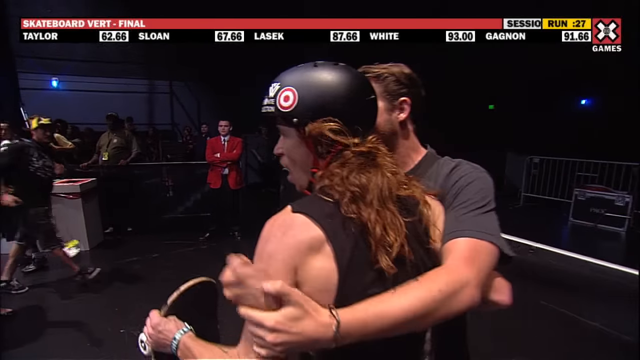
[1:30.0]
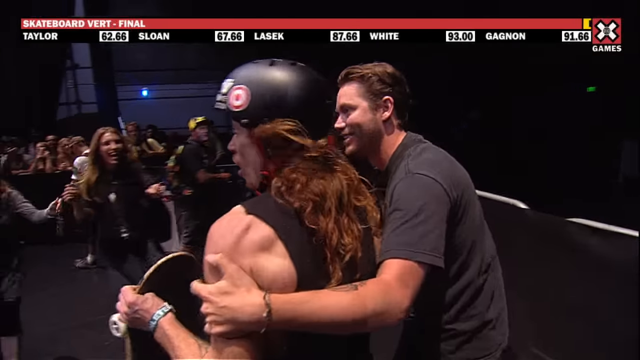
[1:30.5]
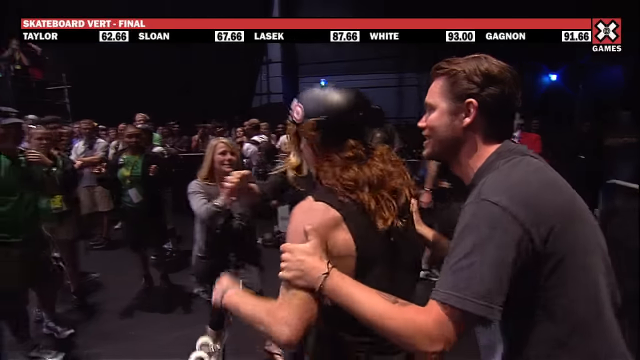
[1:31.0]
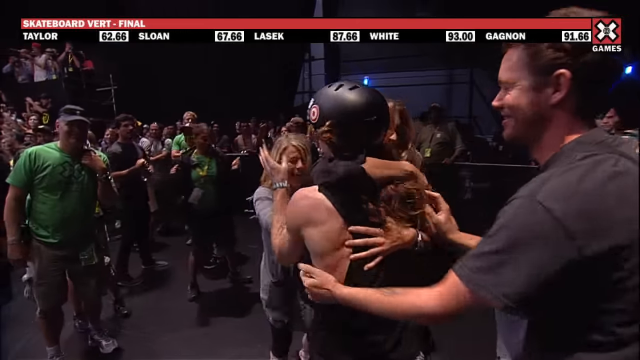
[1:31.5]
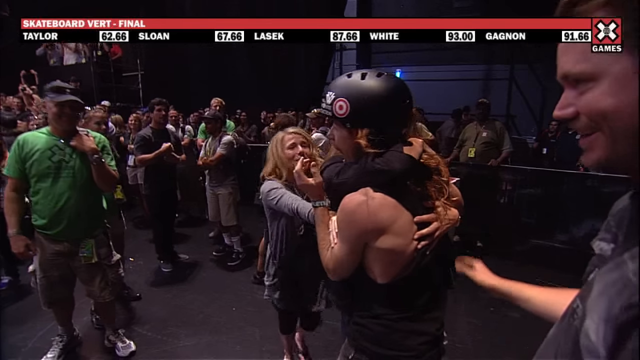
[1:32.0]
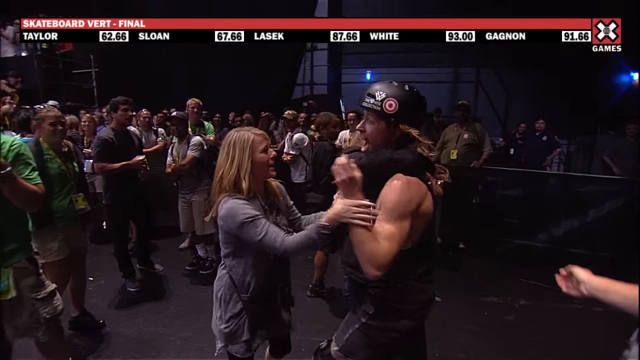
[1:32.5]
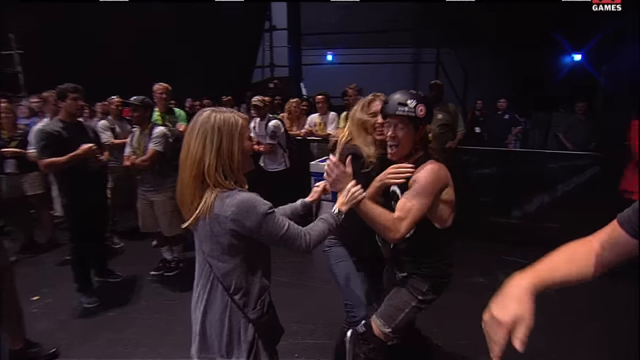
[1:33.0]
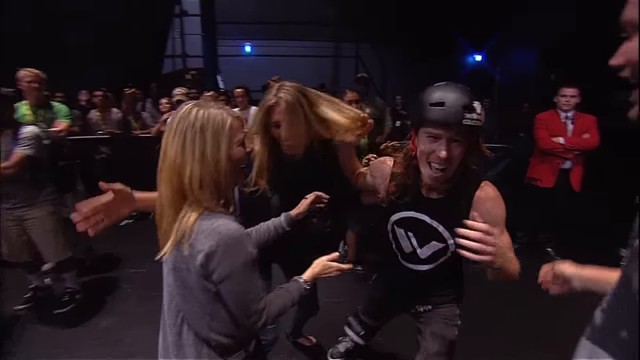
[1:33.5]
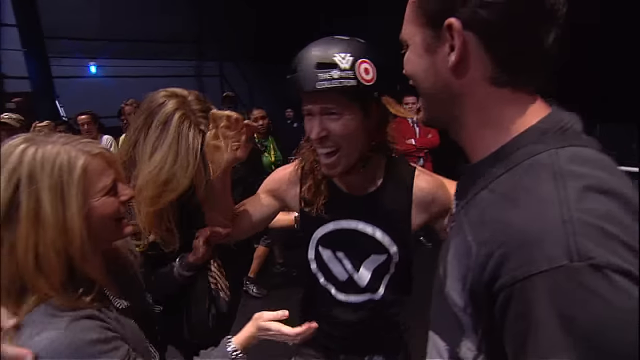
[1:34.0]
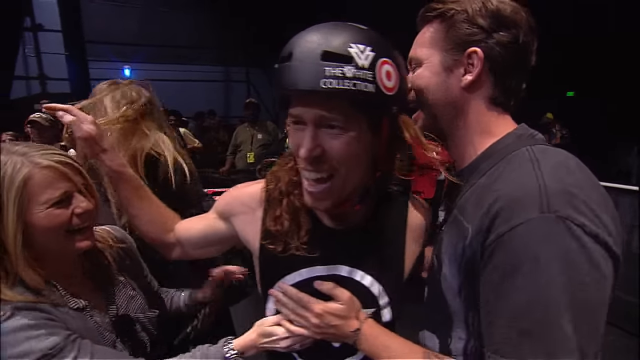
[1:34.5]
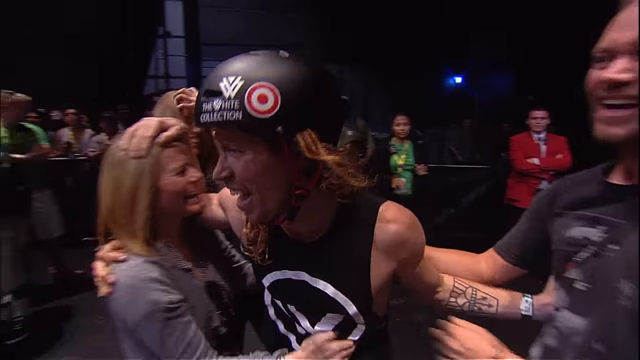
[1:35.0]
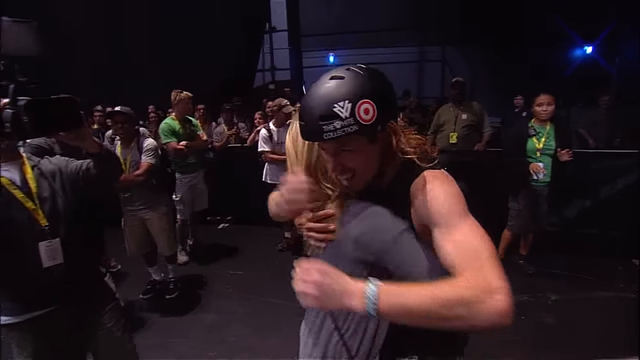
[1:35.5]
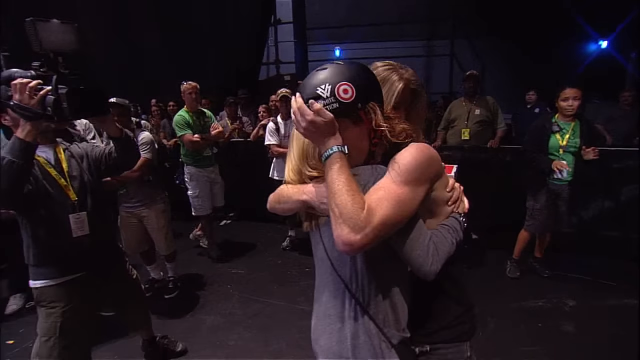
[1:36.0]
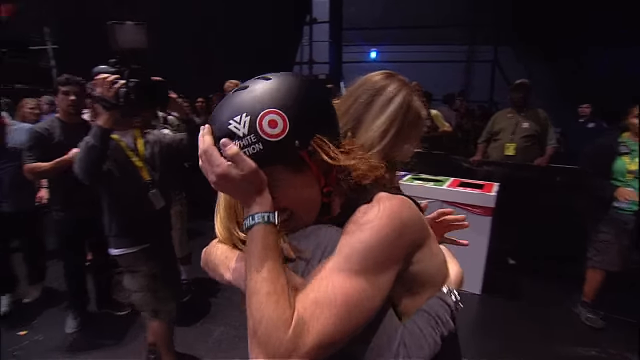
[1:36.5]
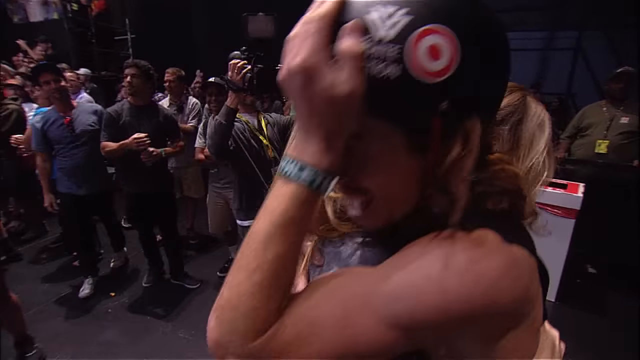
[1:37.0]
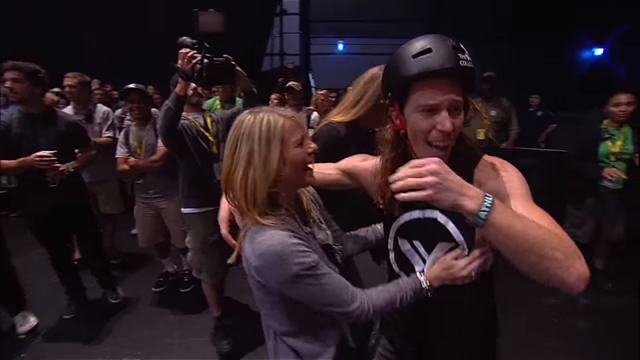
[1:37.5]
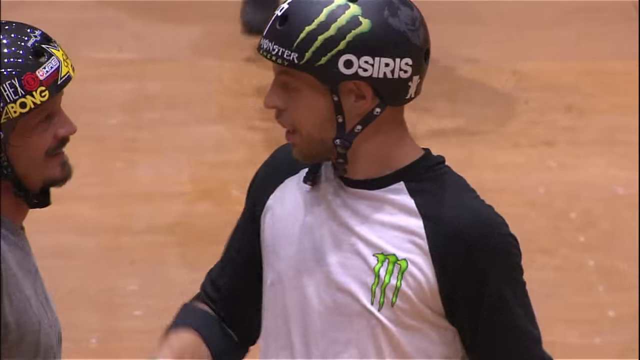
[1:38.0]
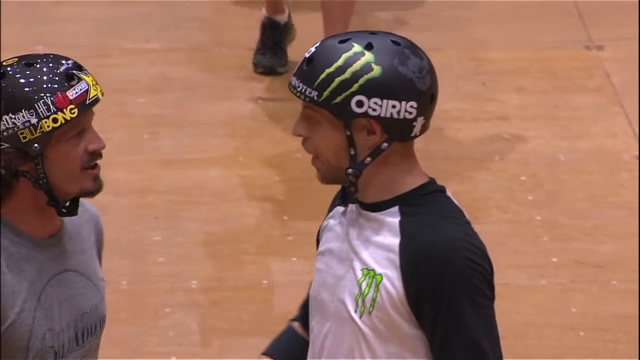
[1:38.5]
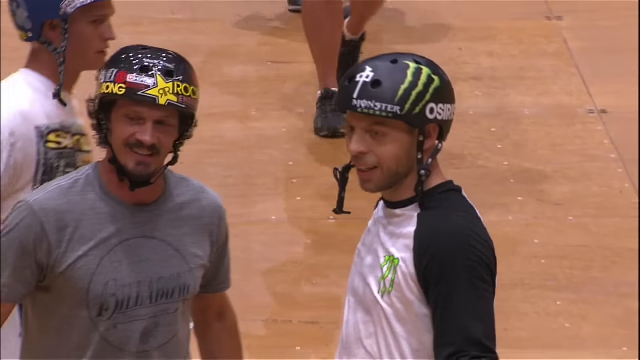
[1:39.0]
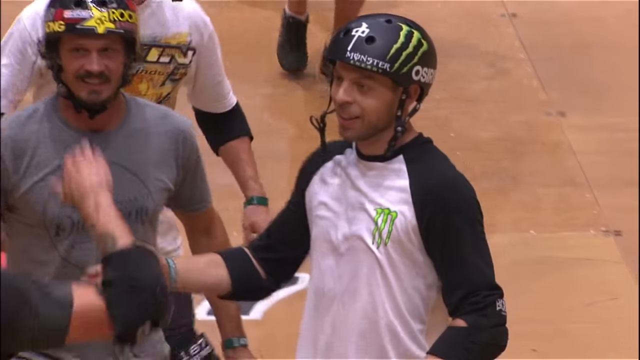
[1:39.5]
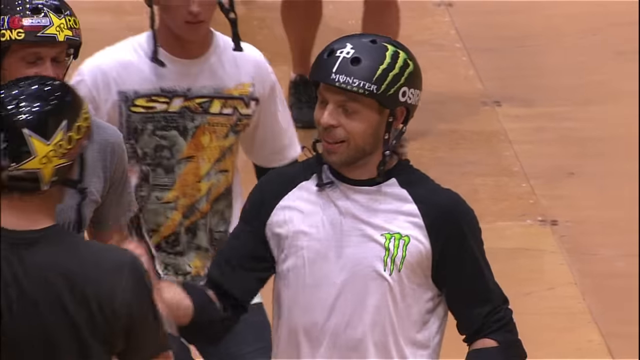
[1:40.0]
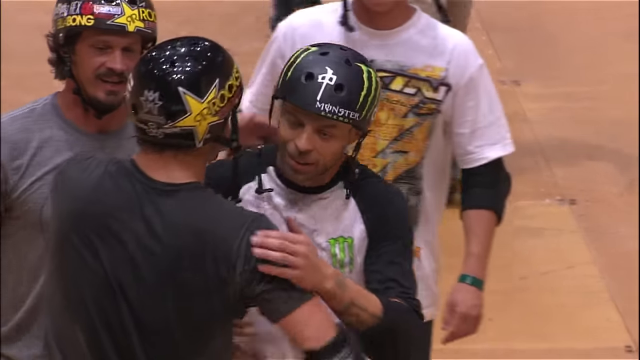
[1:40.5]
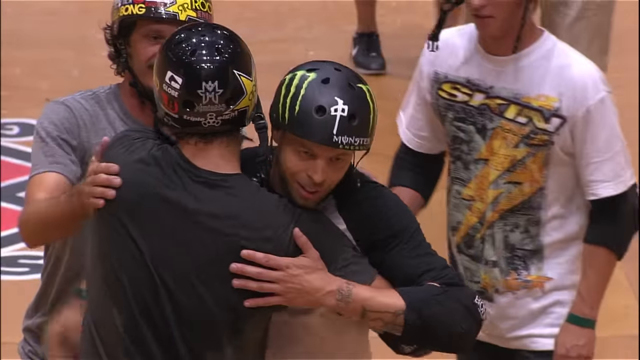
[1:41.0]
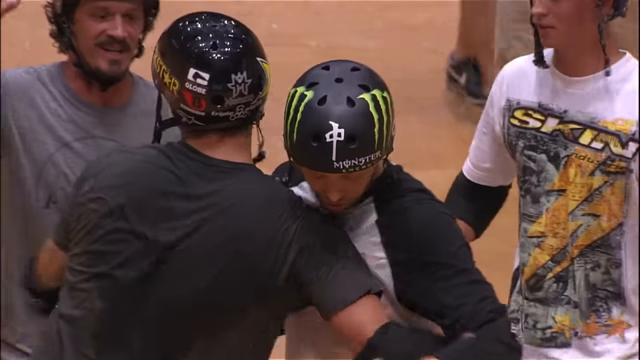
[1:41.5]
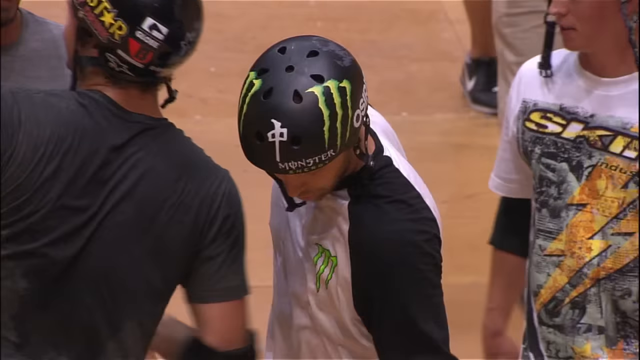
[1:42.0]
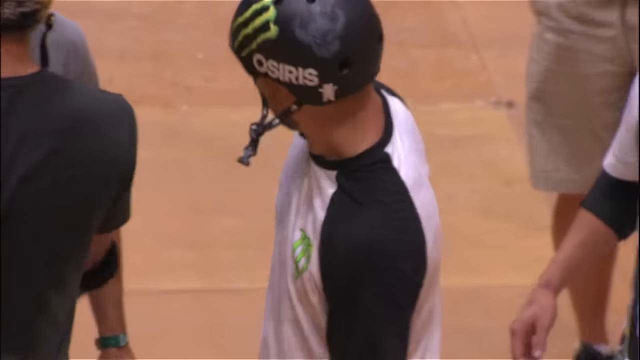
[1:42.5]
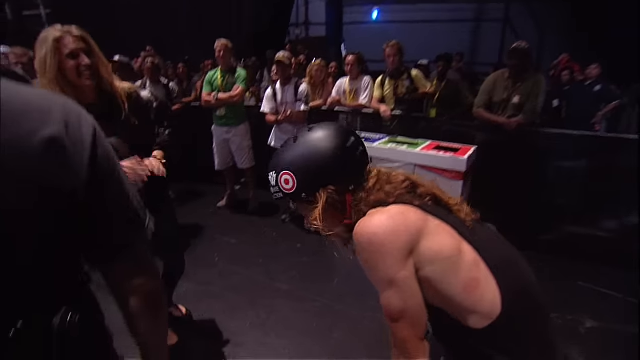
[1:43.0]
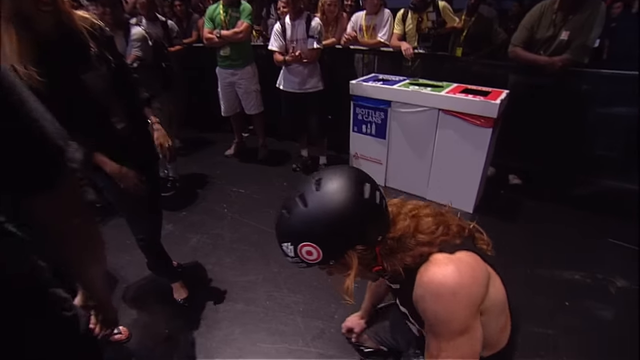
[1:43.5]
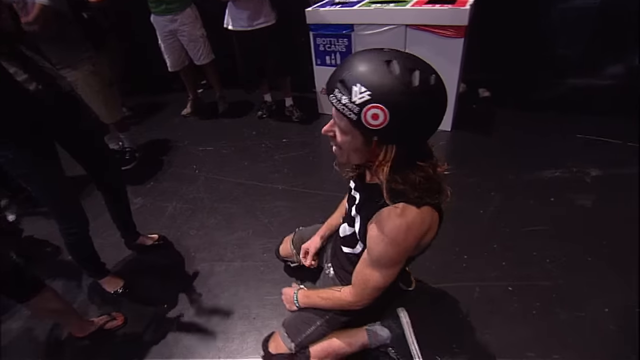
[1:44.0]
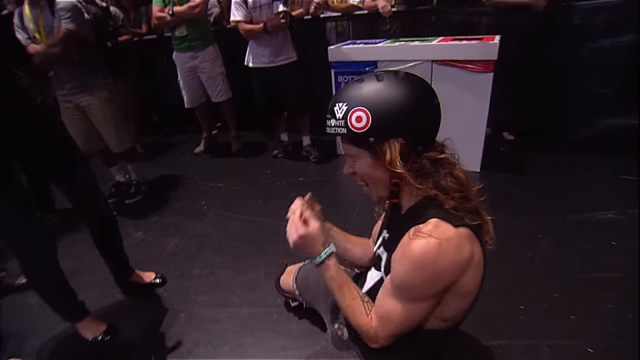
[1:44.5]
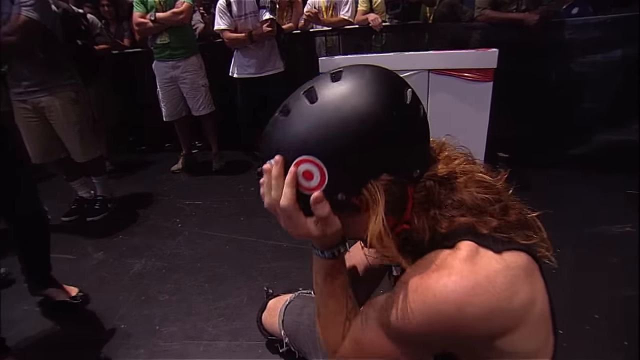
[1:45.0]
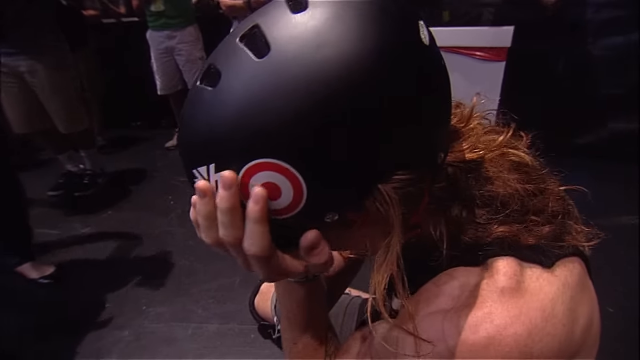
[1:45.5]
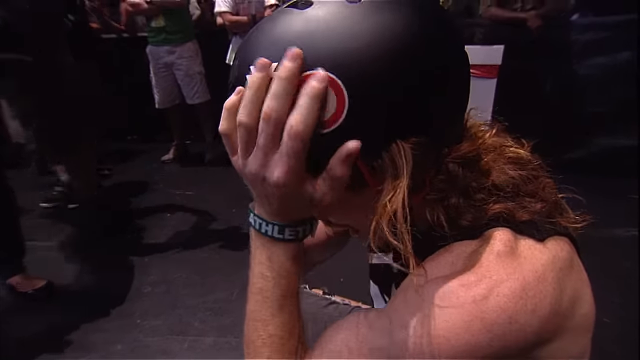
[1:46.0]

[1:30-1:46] The skateboarder in the white tank top hugs three people, going from one to the next: a man and two women. He then gets down on his knees and puts his hands on his temples, laughing with his mouth open the whole time. The skateboarder who slid on his knees does not appear too upset, though he has lost, and he greets a couple of people. The view is now down on the floor next to the ramp, where people are watching from behind a fence, except for some camera people who are still recording the winner and the loser. The event looks emotional.